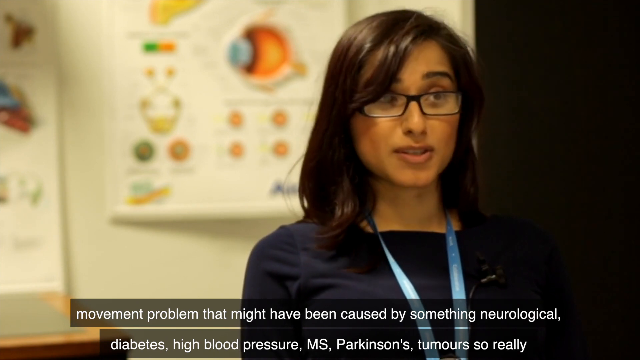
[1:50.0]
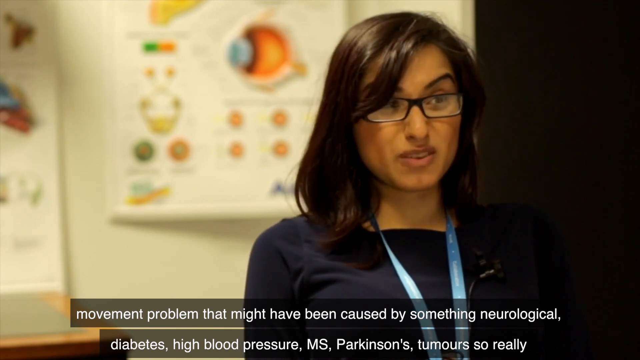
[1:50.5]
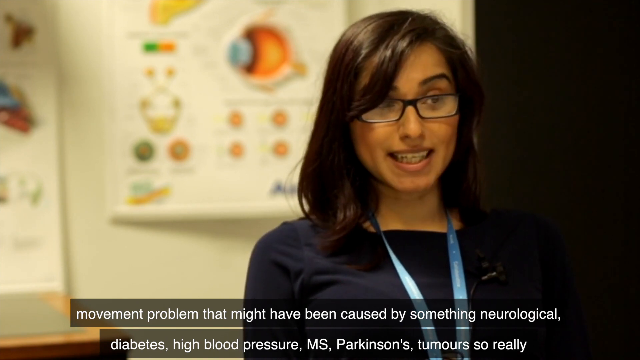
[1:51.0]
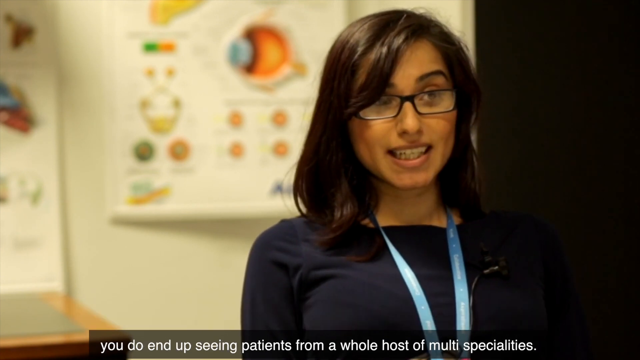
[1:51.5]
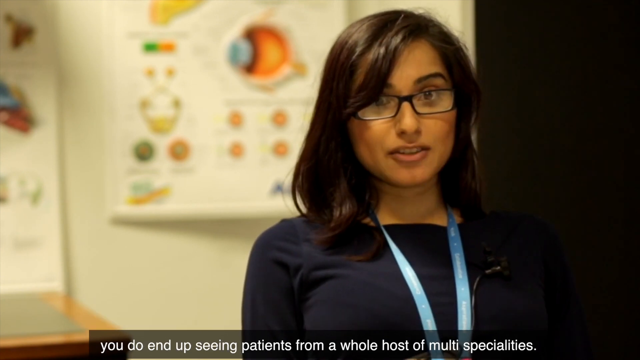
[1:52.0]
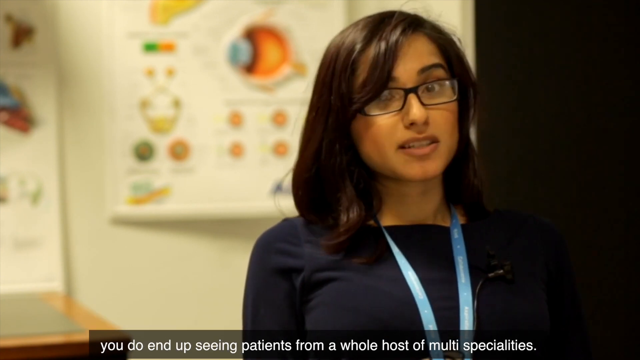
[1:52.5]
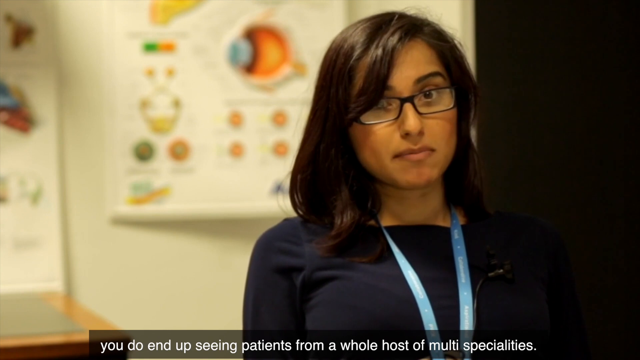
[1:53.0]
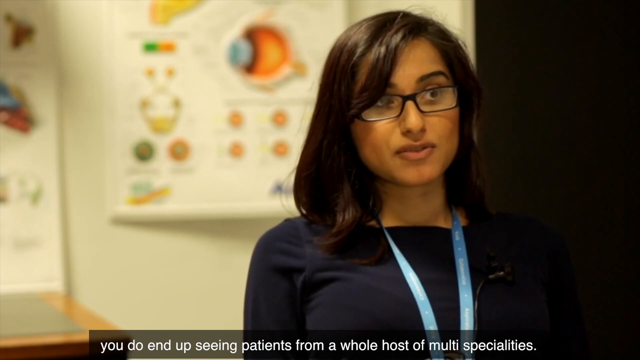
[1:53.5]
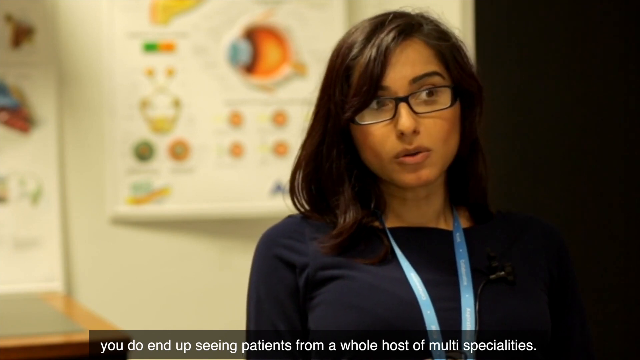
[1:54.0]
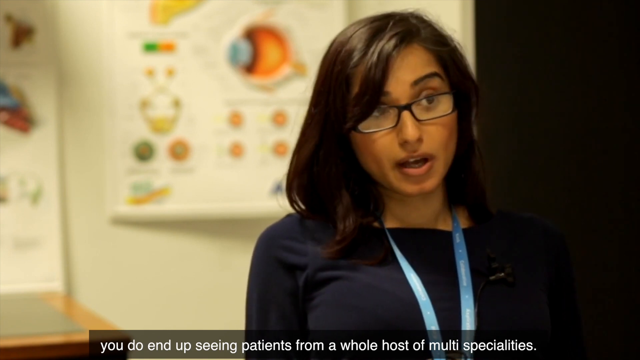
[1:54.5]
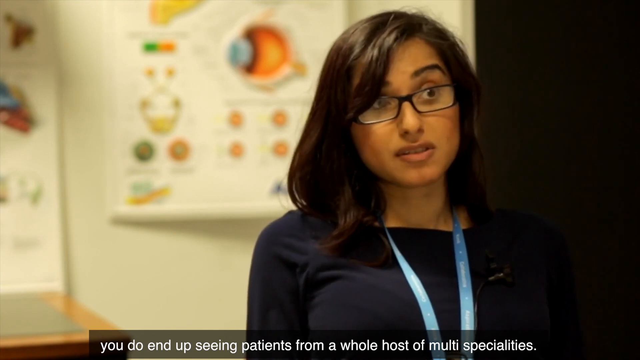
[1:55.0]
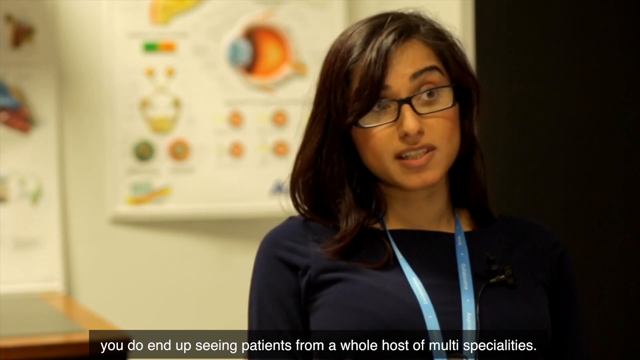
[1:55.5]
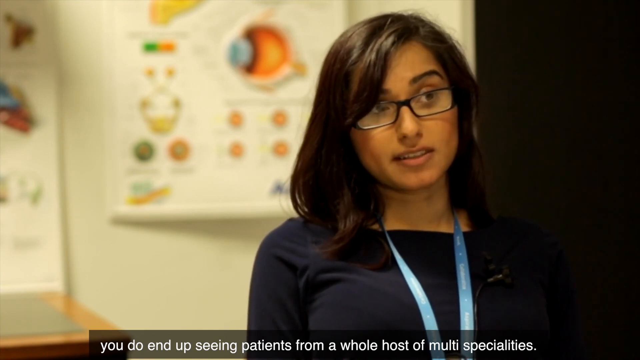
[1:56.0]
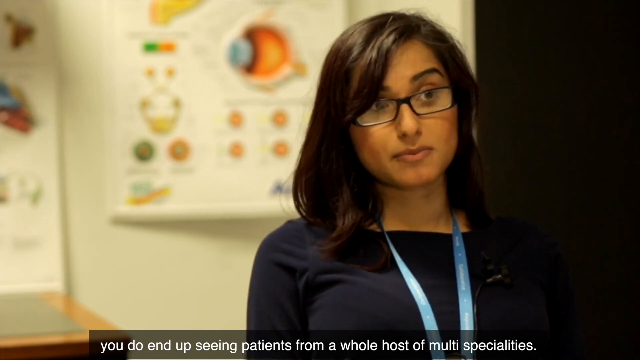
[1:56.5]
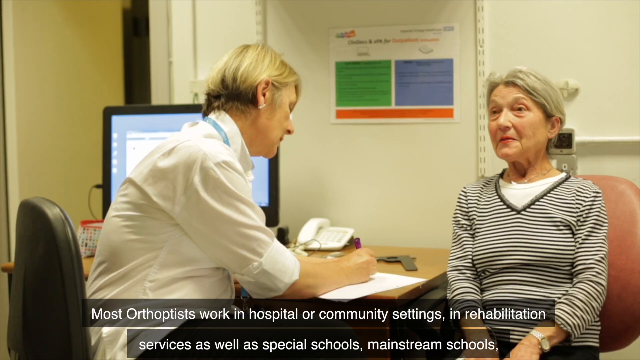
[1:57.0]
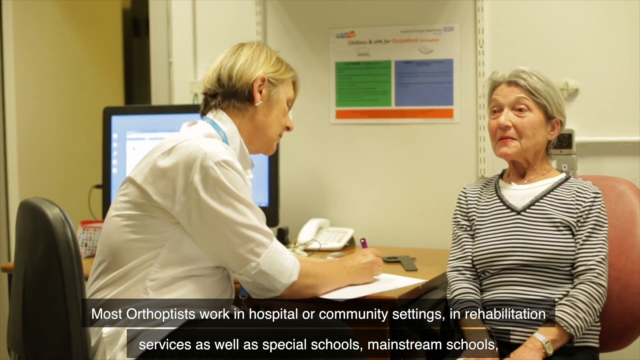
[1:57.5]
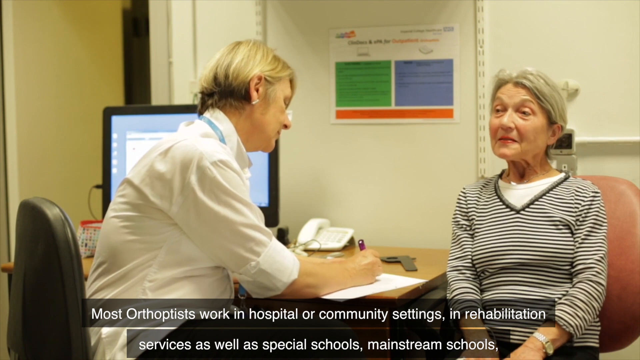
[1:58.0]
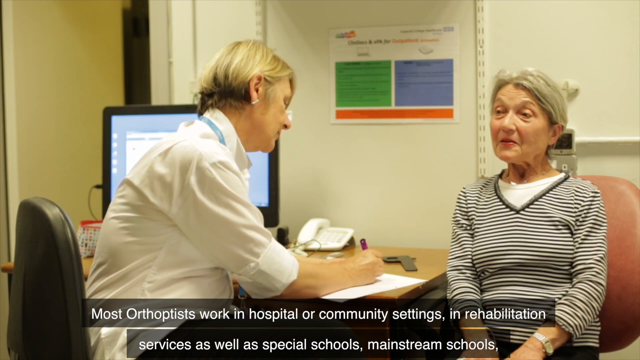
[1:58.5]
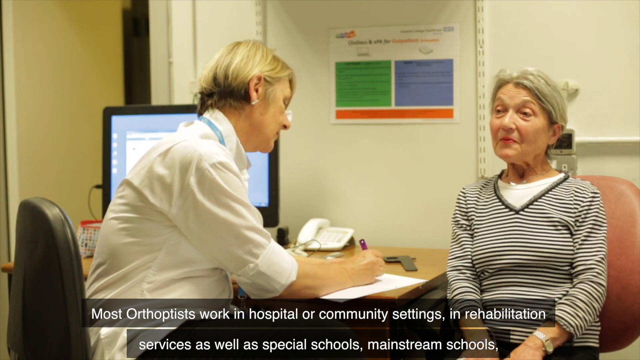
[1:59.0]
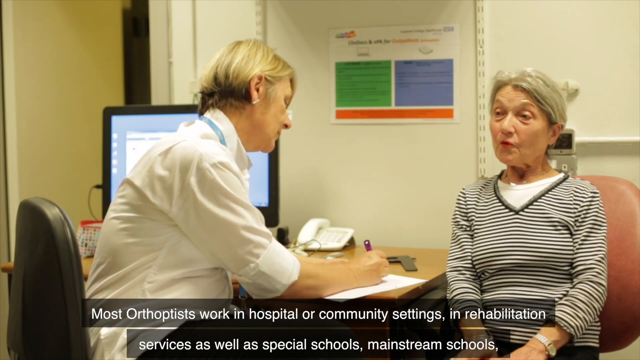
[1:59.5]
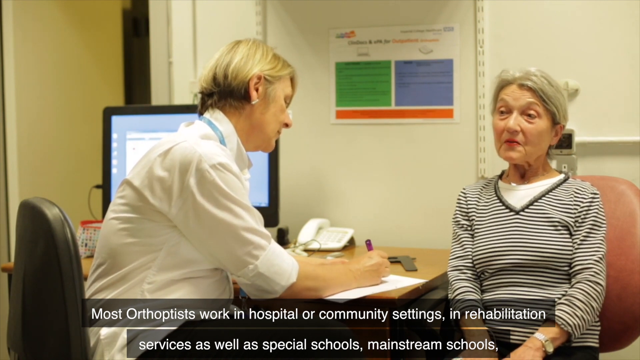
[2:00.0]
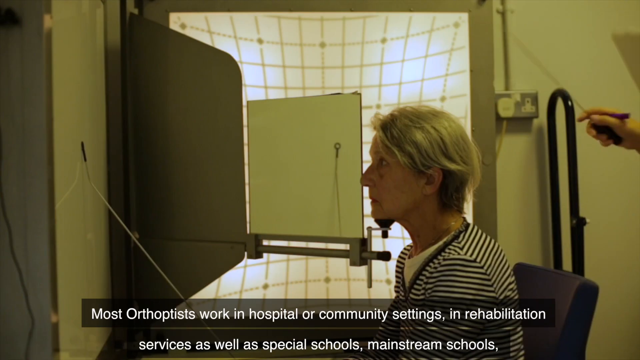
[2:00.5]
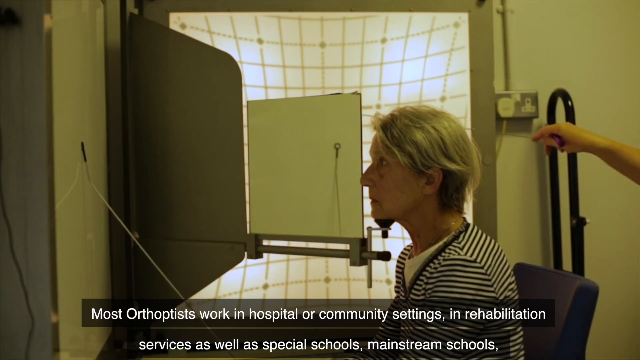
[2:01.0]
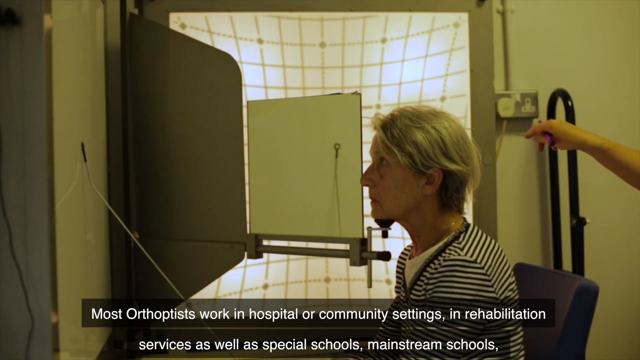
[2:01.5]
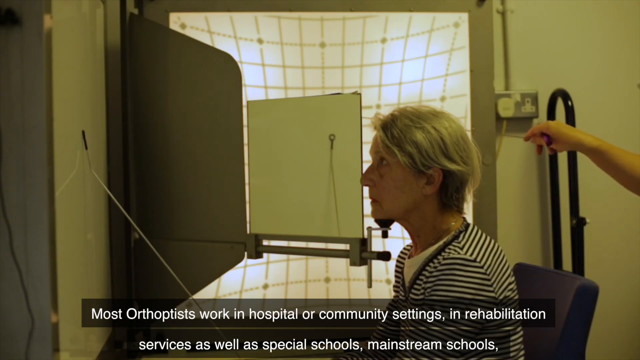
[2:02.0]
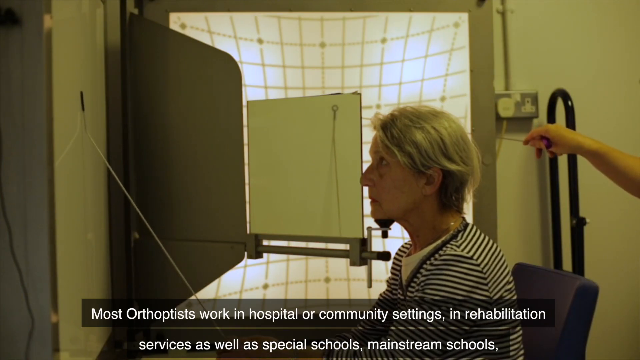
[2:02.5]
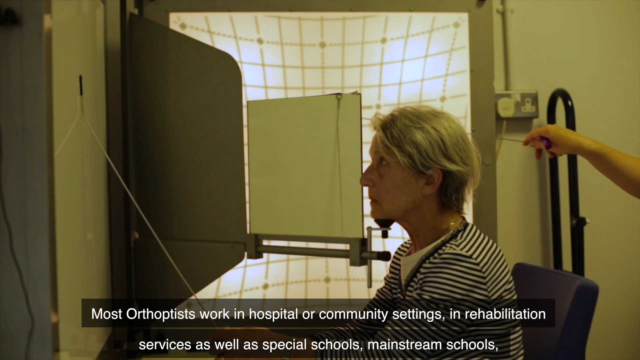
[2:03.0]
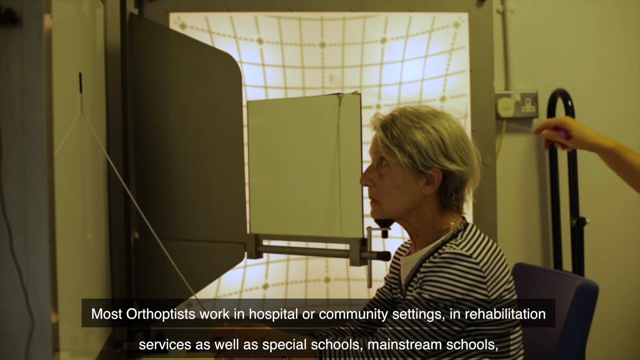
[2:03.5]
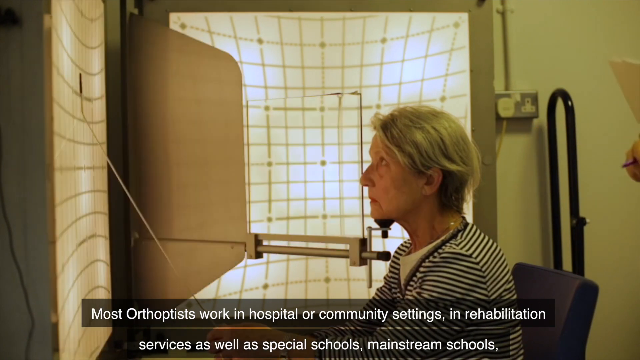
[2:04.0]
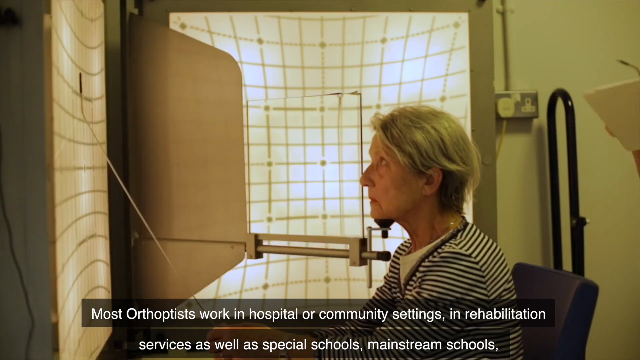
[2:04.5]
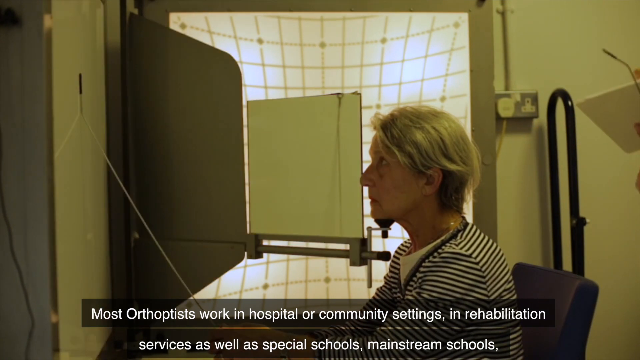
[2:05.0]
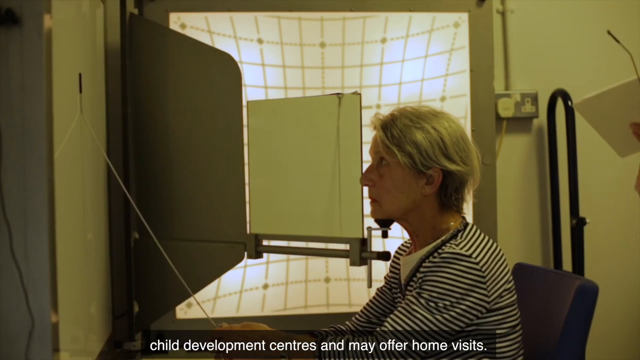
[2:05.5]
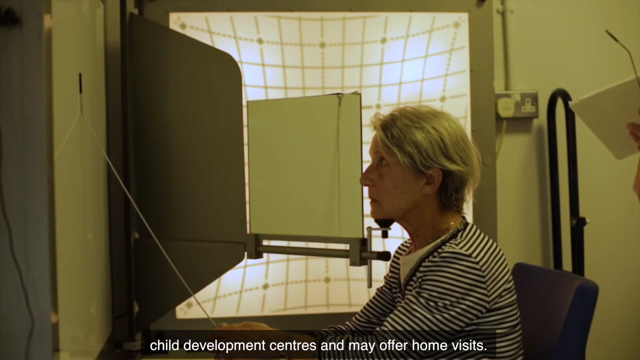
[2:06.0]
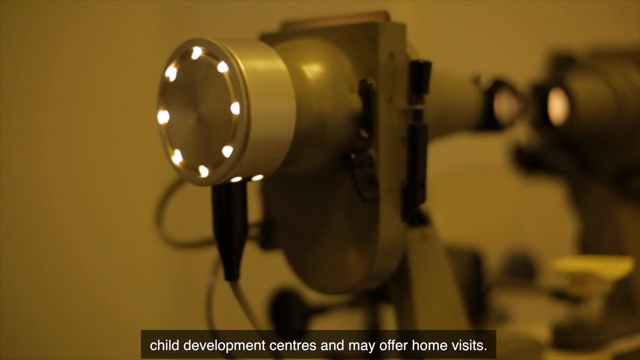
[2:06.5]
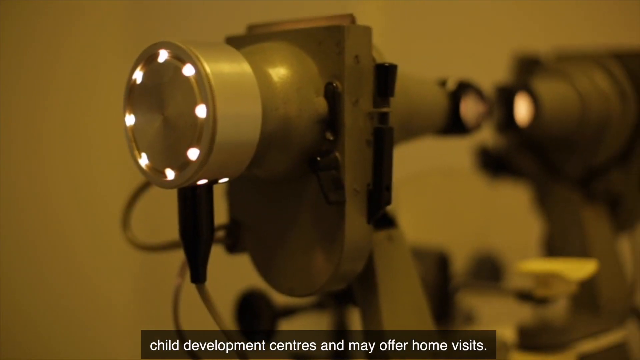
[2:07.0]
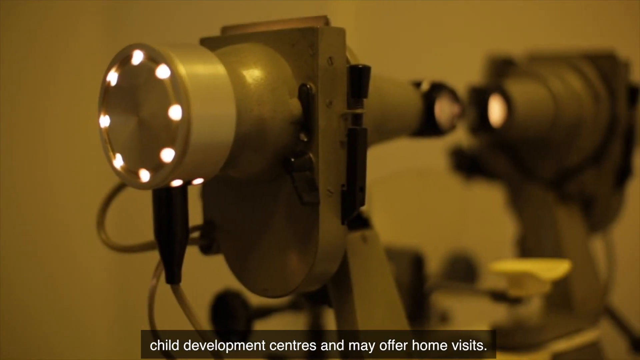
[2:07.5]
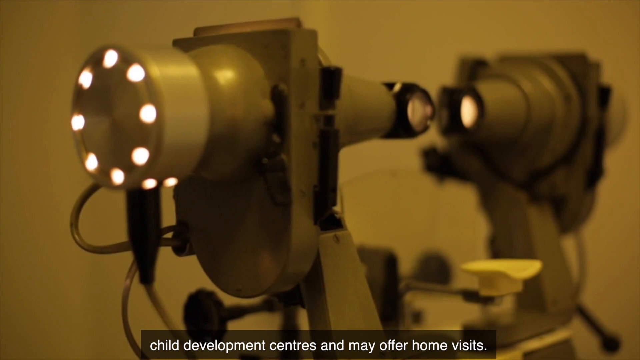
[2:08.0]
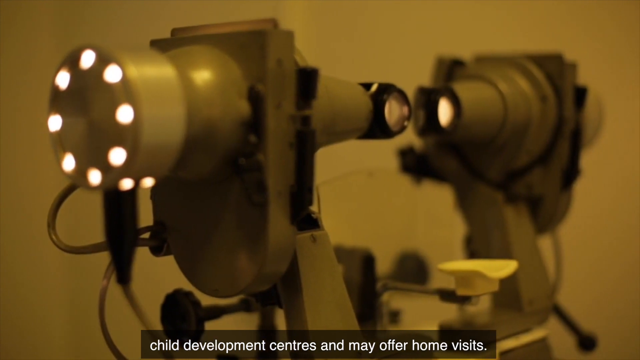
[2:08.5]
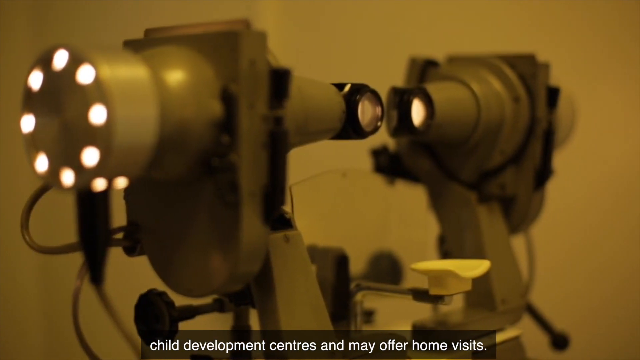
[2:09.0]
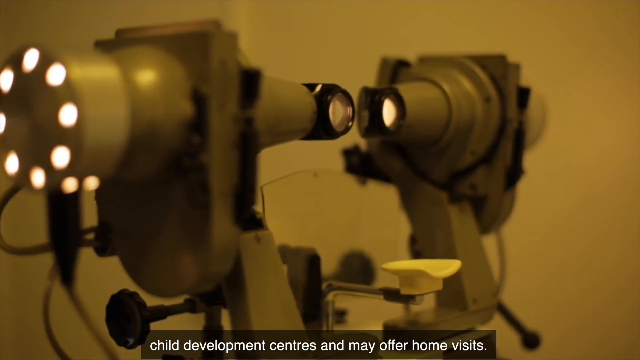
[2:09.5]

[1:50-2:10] The doctor with long dark hair is speaking again. The video then shifts to the female doctor with short hair working with an older woman whose gray hair is pulled up into a bun at the back. The older woman wears a gray striped long-sleeved shirt with a little white inset at the neck. She and the doctor talk at the desk. Then she goes to a room where the lights are turned down and looks into a machine. Someone's arm is visible behind her, and there is a big screen beside her. Her eyes are being checked, and a light flashes. The camera then kind of zooms in on the instrument used in this room.